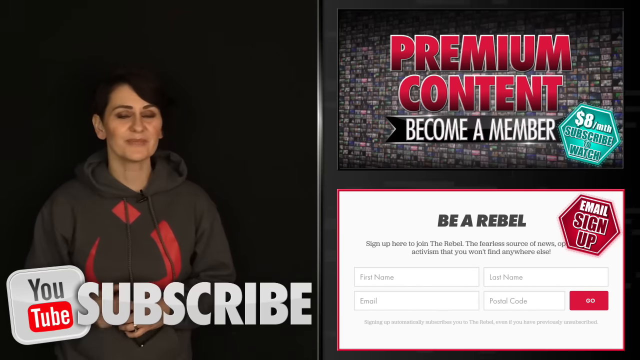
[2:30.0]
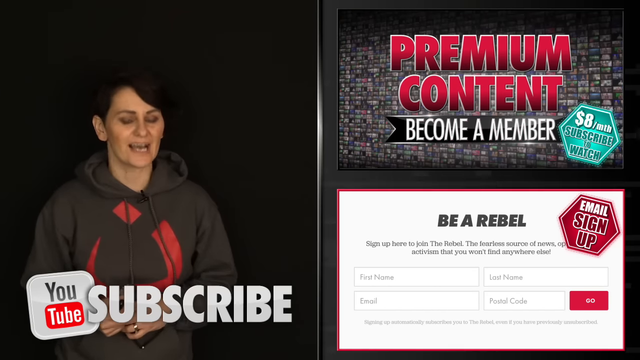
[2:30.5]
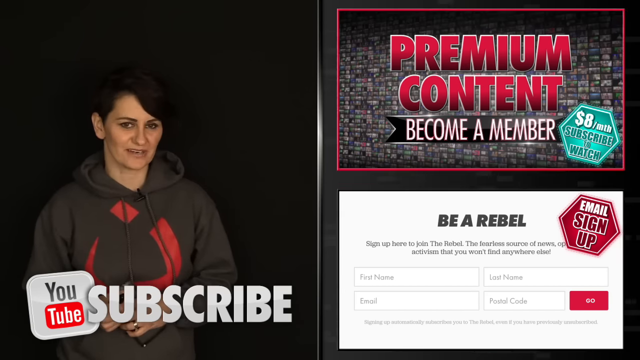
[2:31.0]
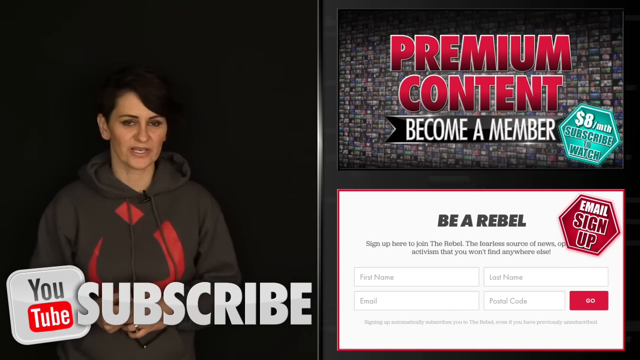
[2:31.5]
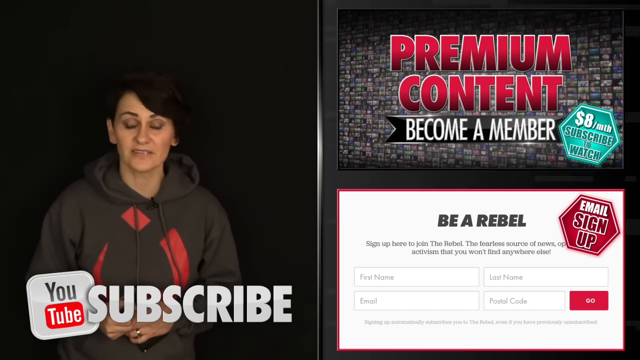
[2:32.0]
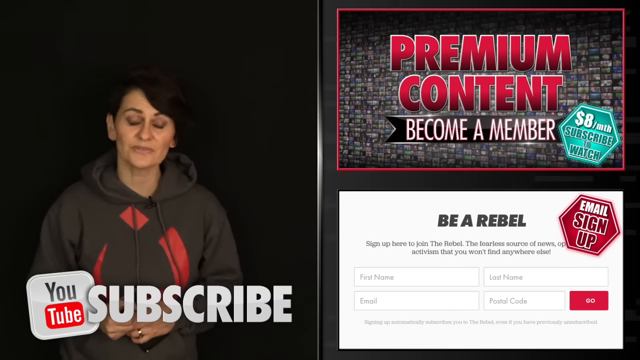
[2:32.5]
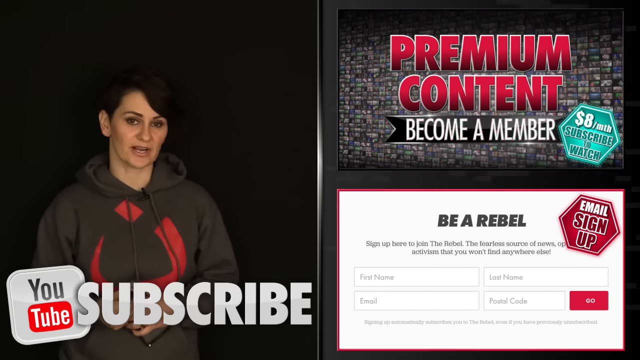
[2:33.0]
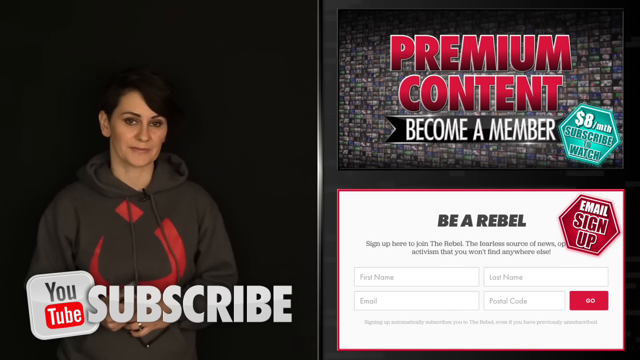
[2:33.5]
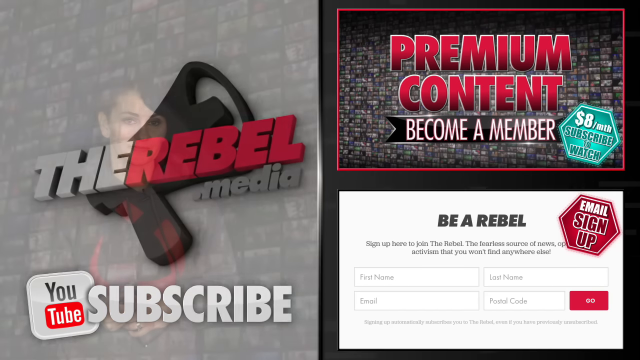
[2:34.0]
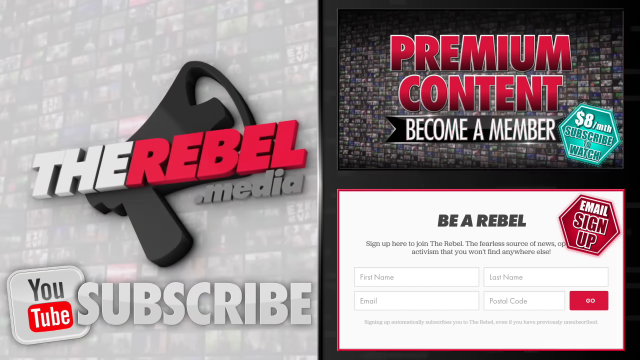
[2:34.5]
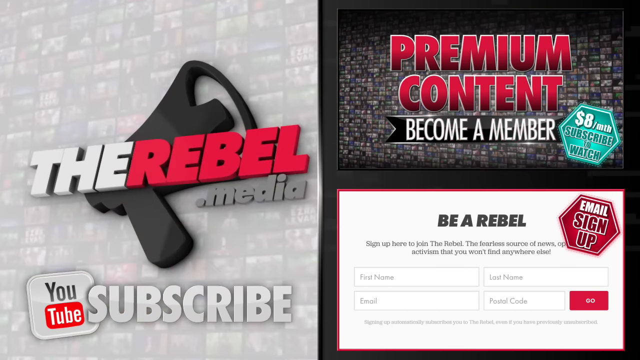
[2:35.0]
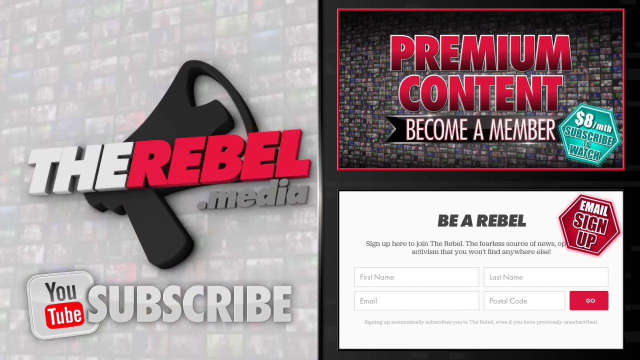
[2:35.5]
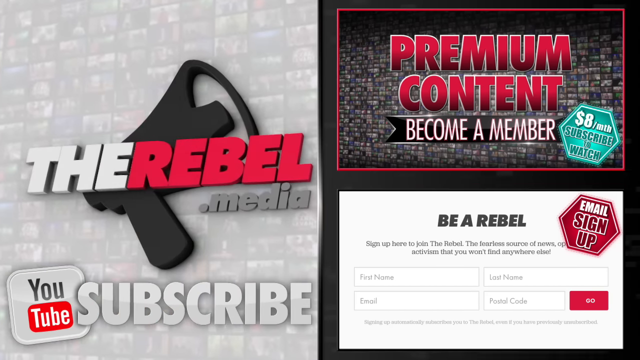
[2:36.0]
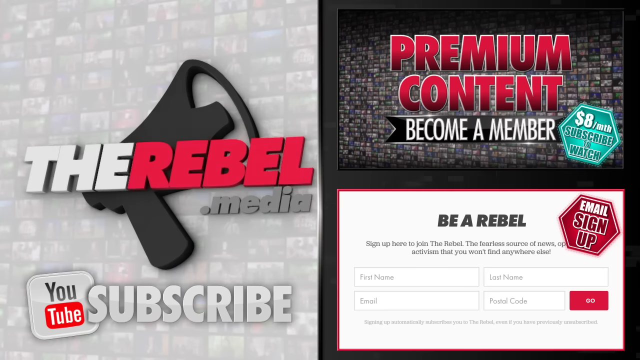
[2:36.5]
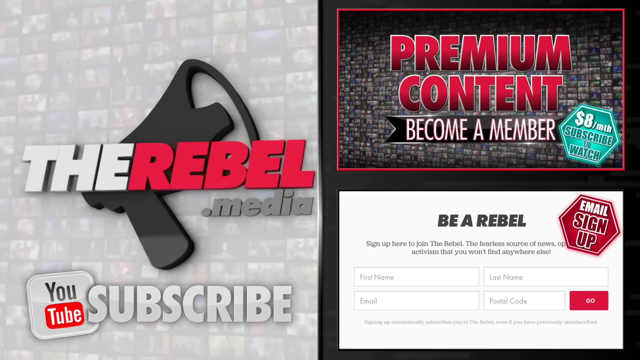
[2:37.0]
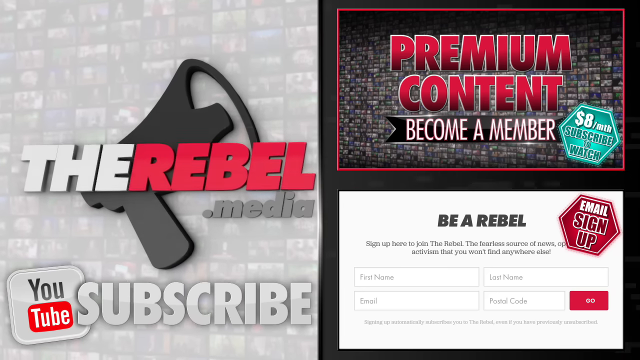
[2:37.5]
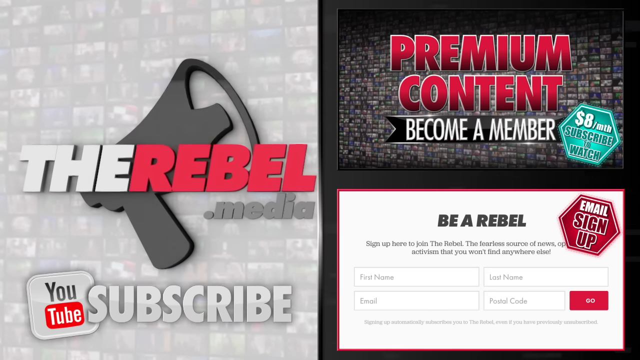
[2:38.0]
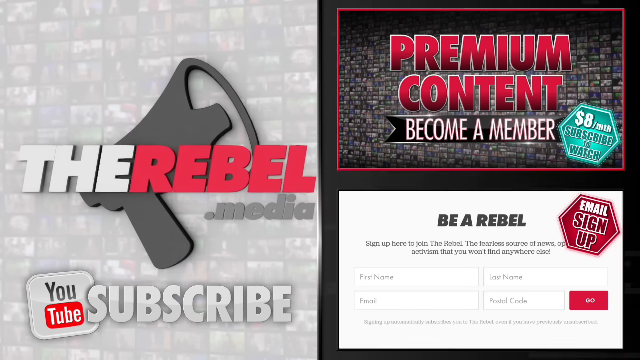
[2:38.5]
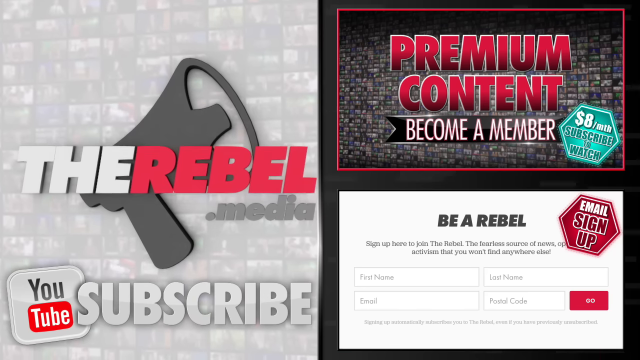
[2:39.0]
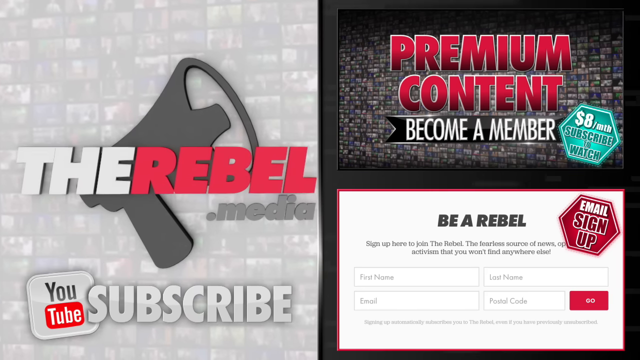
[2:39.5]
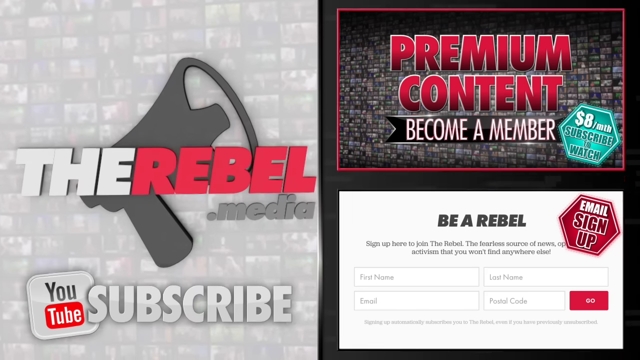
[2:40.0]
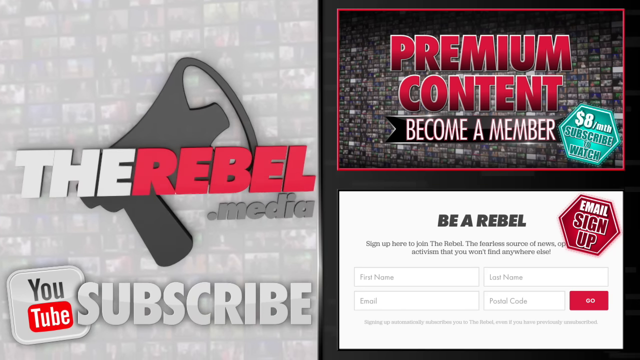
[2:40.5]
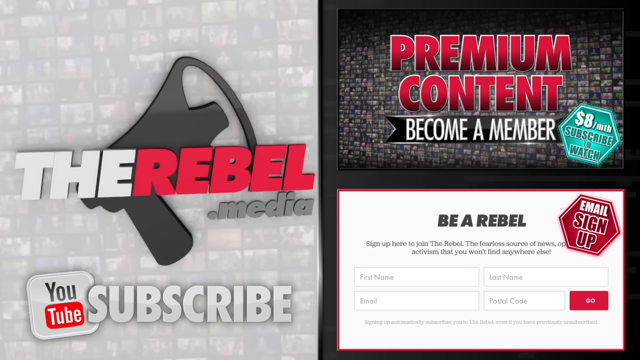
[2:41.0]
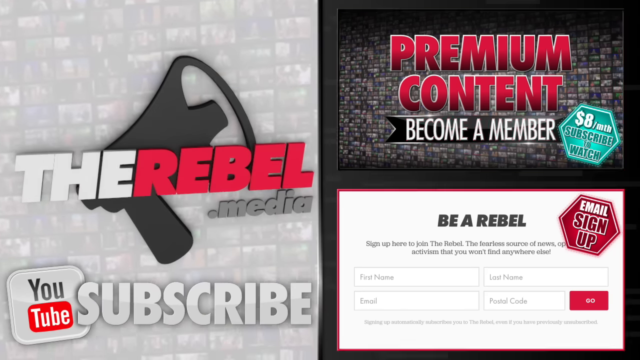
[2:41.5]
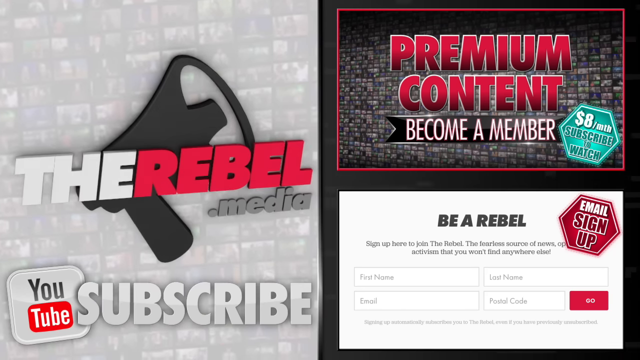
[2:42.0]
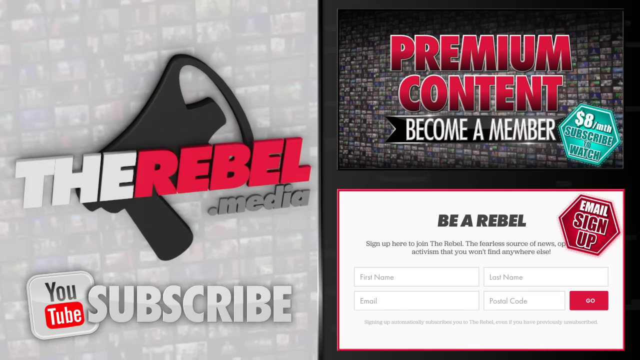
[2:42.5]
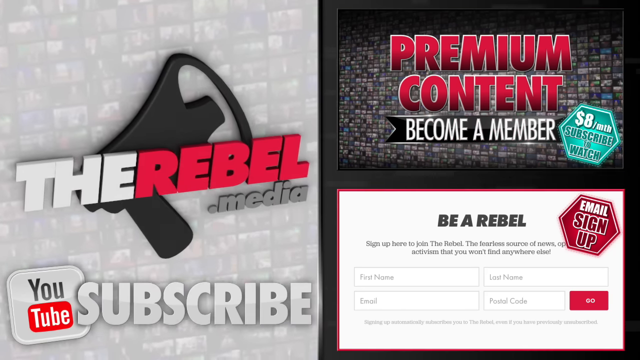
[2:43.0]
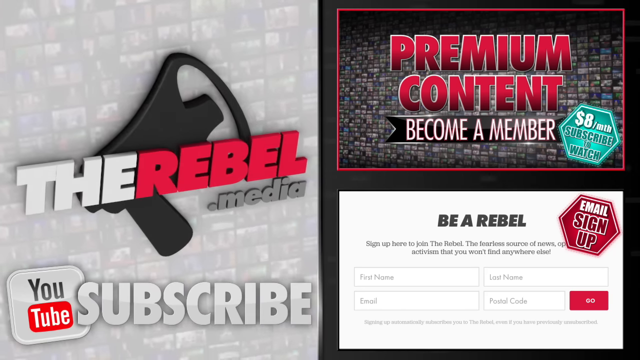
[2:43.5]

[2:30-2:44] In the conclusion, the news anchor from The Rebel Media asks viewers to subscribe to the YouTube channel. On the right side of the screen are a few items: an offer to be part of the community and become a member by paying $8 a month to watch premium content, and below it what seems to be a newsletter sign-up about becoming a rebel, with fields for first name, last name and email to receive notifications about the channel.